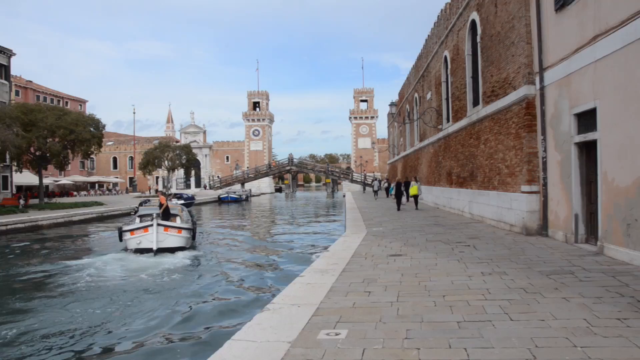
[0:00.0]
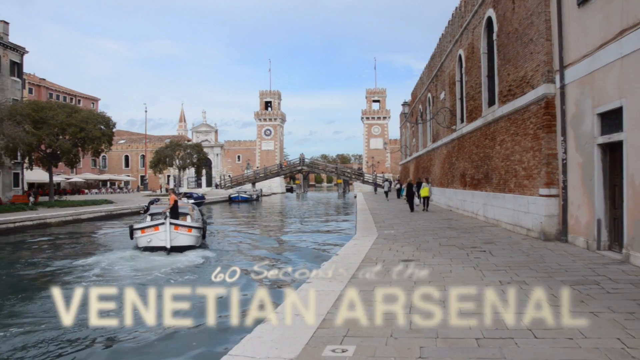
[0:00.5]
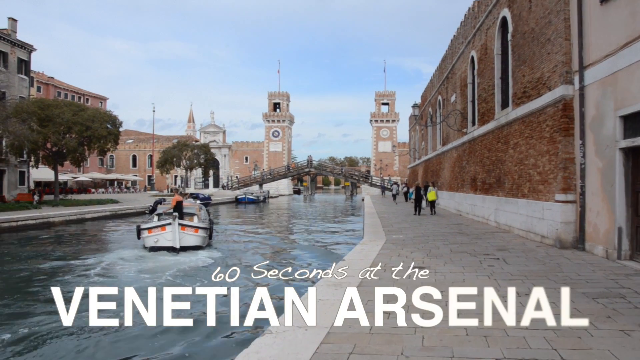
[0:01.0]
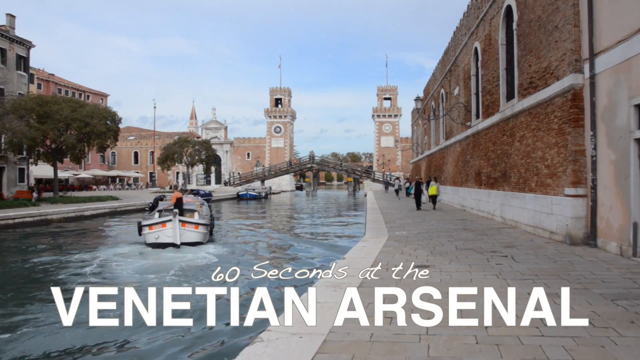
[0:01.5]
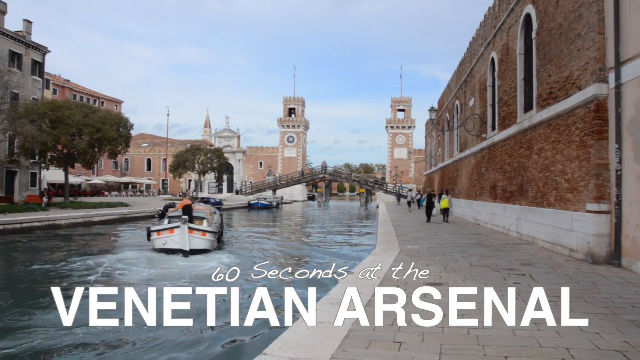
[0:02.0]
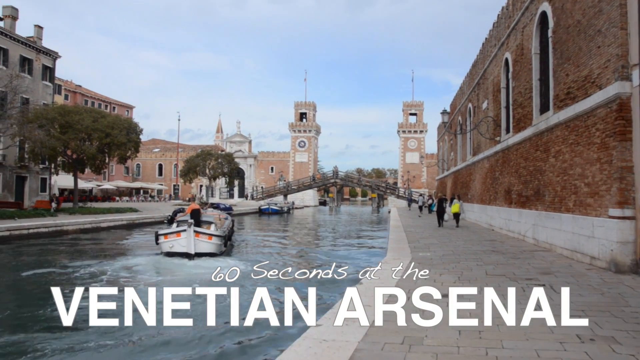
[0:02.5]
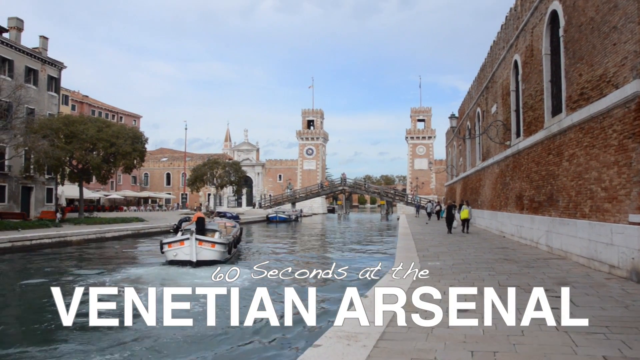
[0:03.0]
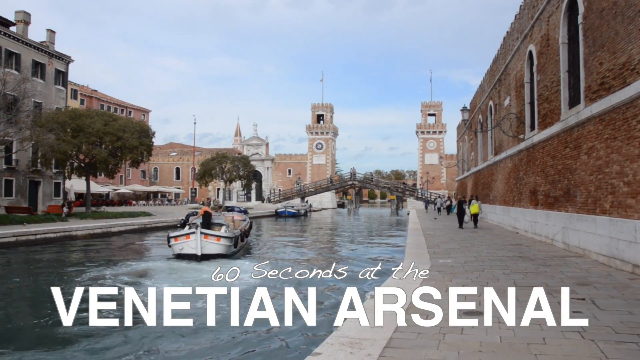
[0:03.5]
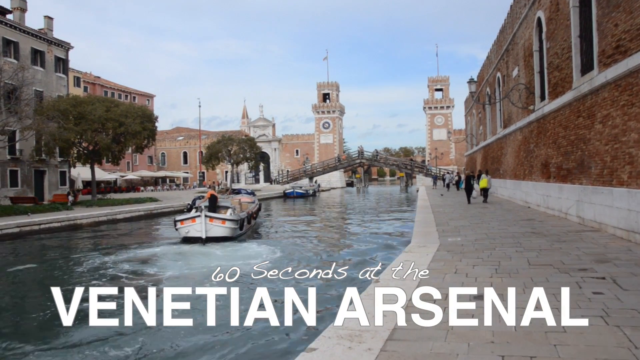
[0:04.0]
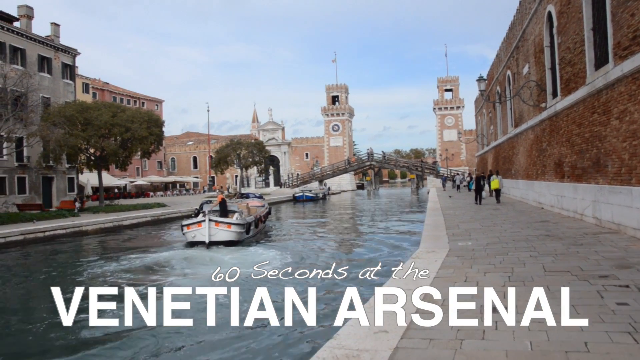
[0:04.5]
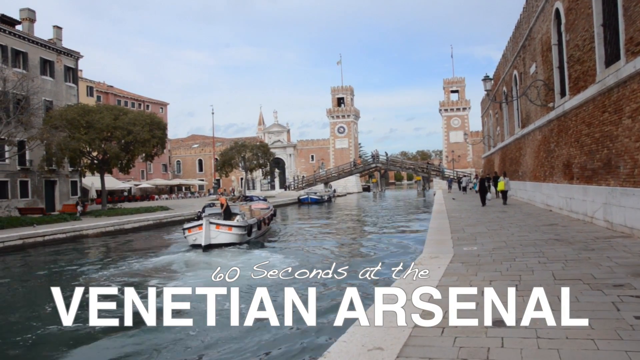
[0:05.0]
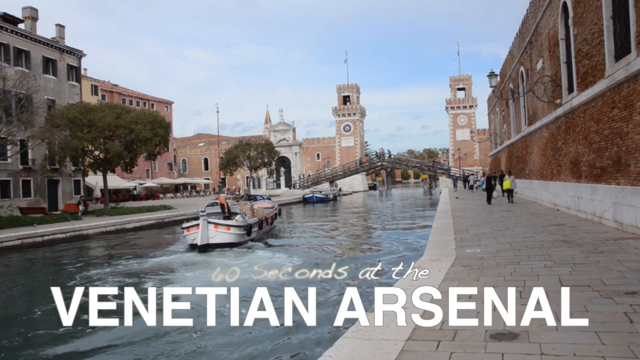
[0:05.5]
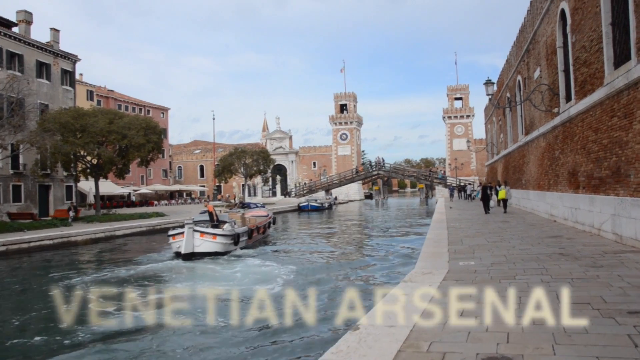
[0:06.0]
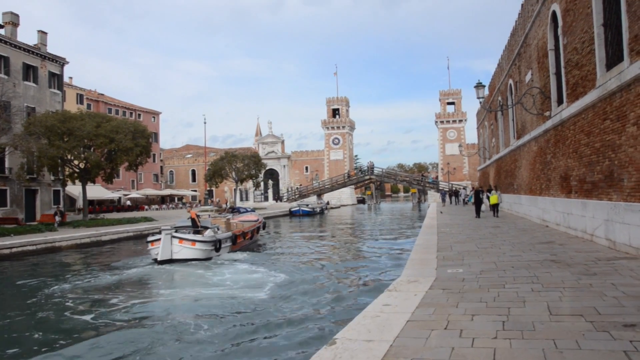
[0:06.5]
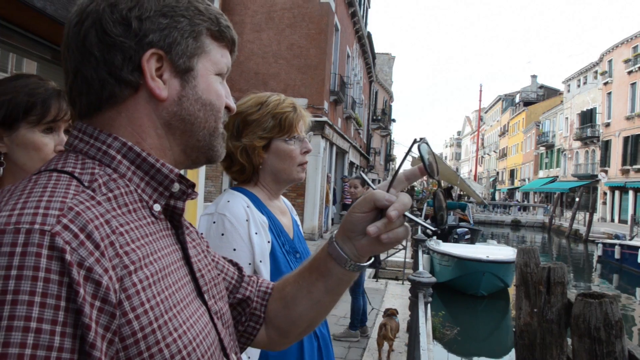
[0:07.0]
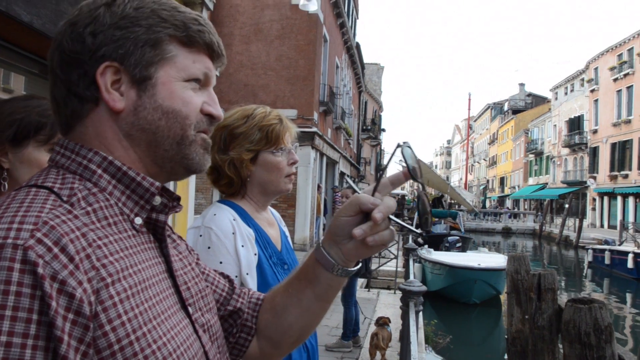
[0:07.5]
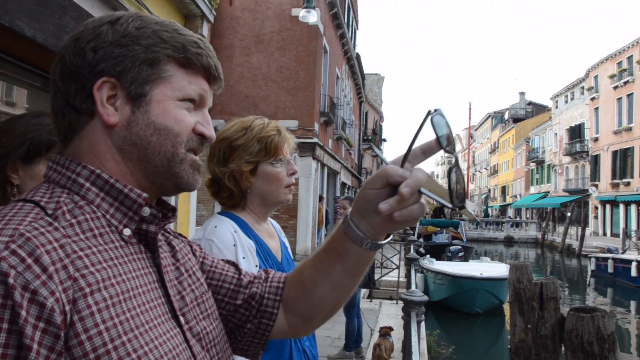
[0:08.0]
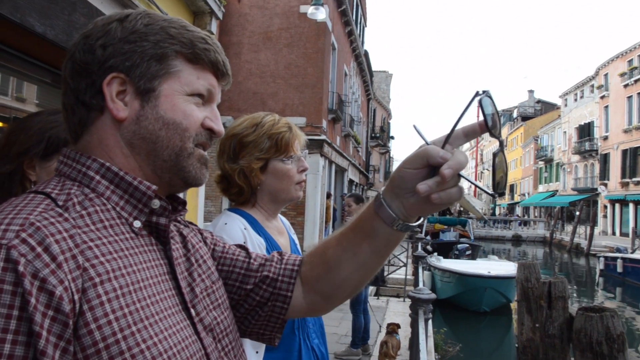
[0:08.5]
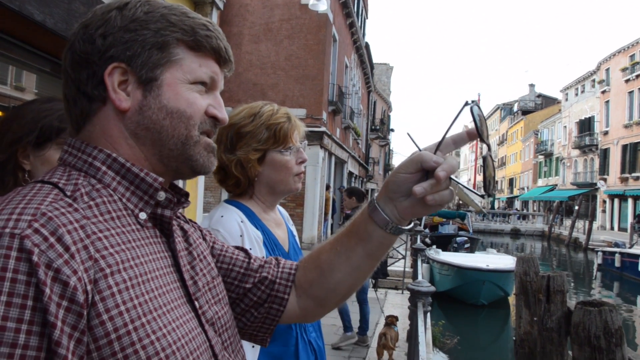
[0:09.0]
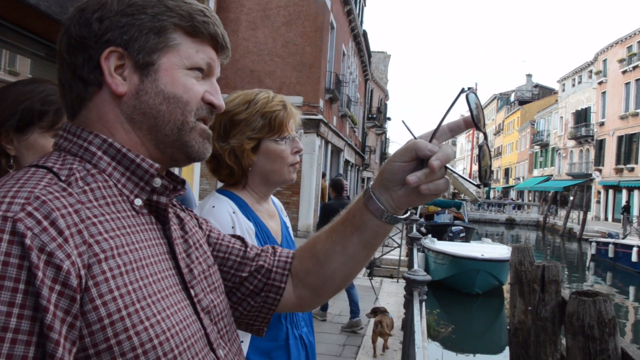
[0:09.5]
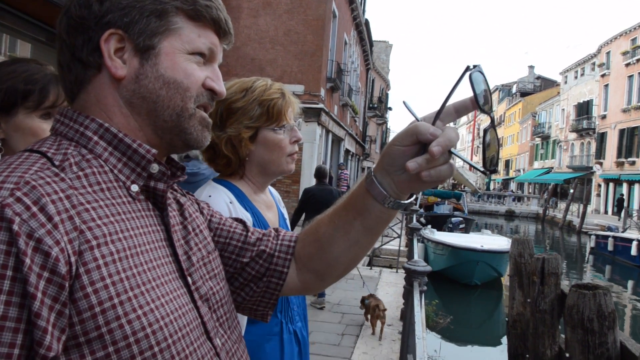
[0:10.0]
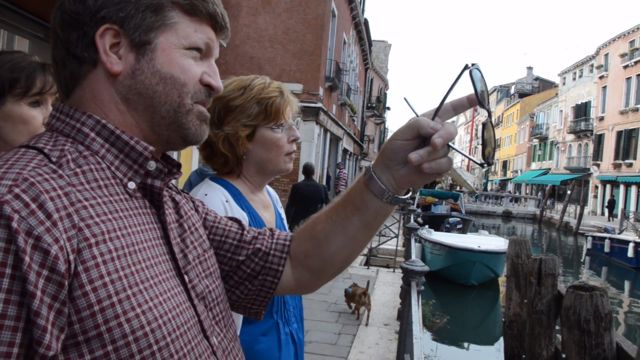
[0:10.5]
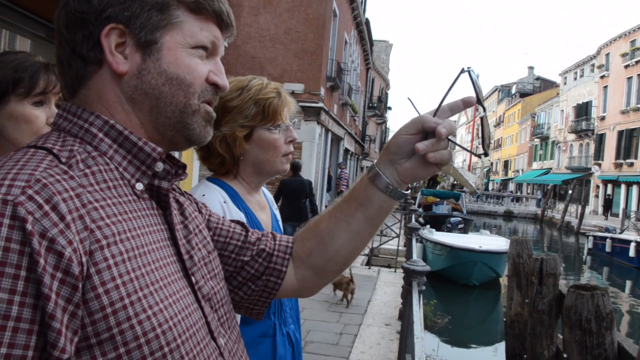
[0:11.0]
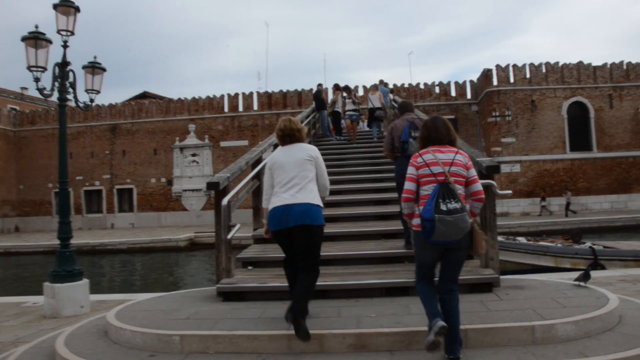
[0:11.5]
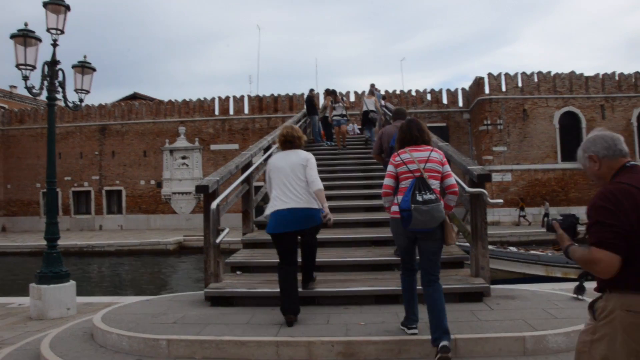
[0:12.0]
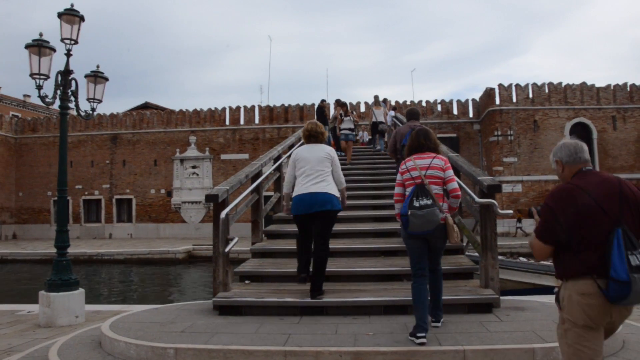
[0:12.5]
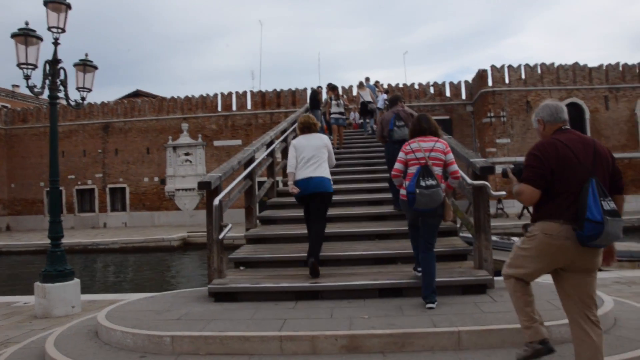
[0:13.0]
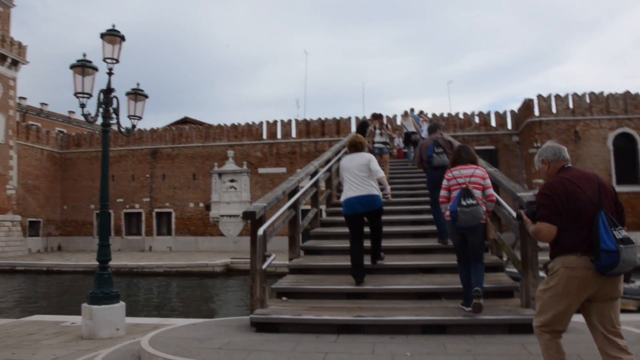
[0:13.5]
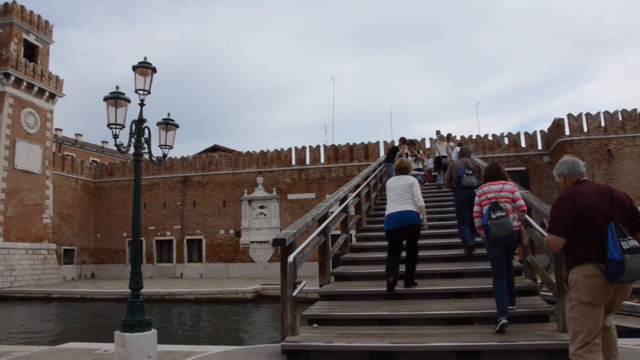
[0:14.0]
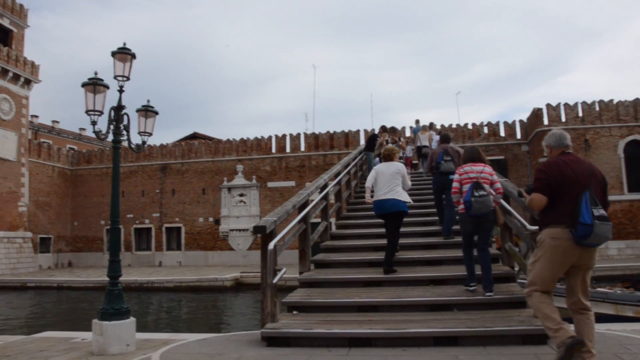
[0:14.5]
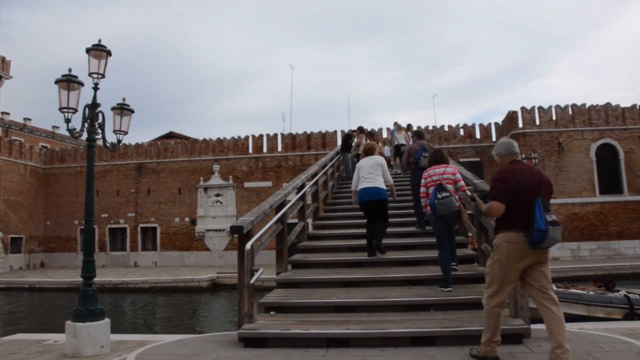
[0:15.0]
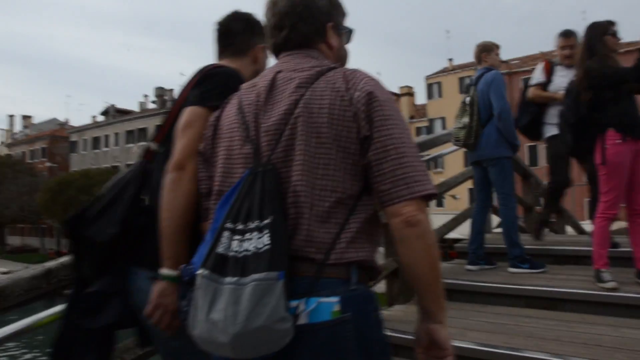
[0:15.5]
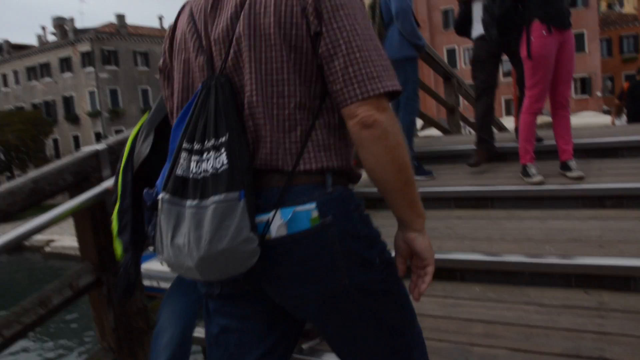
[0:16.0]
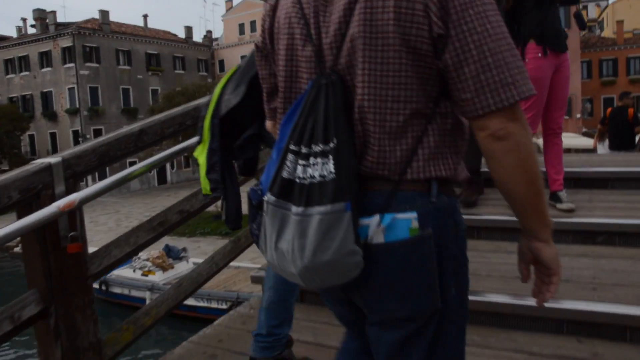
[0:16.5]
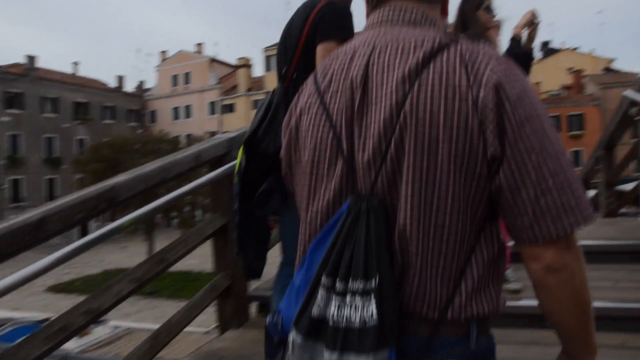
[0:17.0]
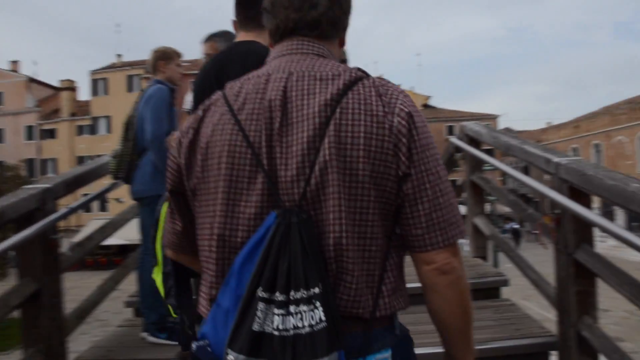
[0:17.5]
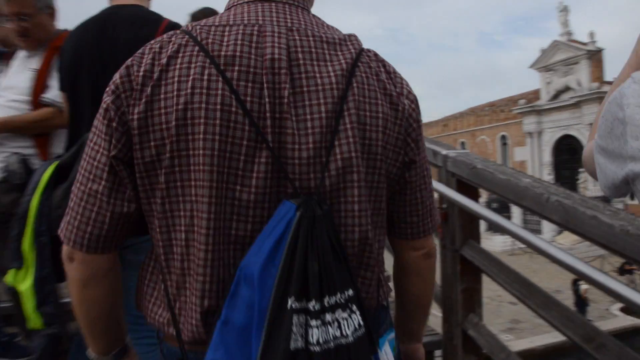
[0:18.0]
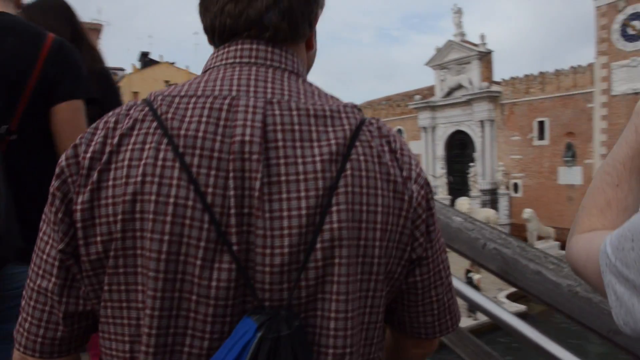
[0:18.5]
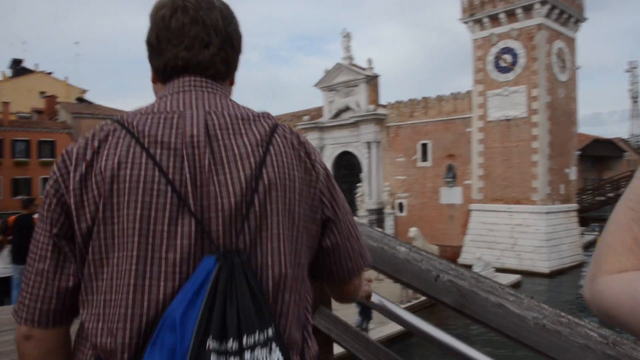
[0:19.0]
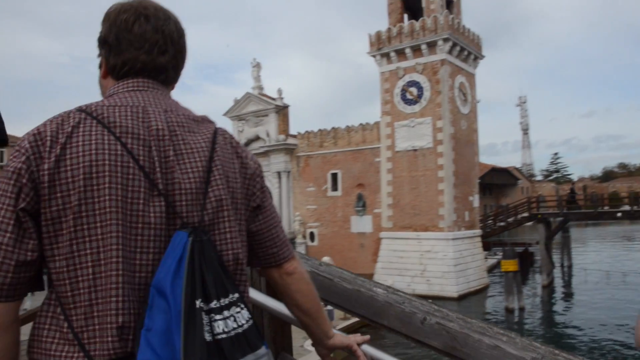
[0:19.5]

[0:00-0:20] People walk down a street in Venice, recording the boats going along the canal, and walk around the streets alongside the water. Then people walk upstairs away from the water. Old buildings and red brick facades appear in both the foreground and the background. In the distance, a woman in a yellow shirt walks away from the person recording the video. In the canal there is a white boat with red circles, and a person appears to be standing inside it. Further off is a pedestrian bridge that lets people cross the canal to a different part of the city. On the other side of the water are a few green trees and some umbrellas, which appear to have patrons sitting under them and eating, though what they are eating is unclear.